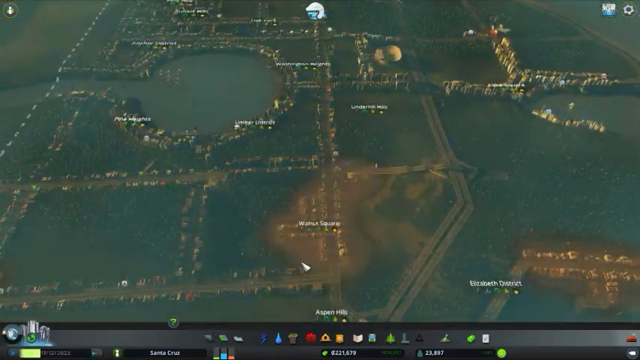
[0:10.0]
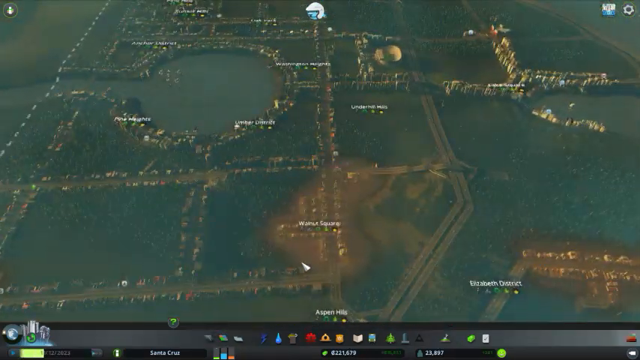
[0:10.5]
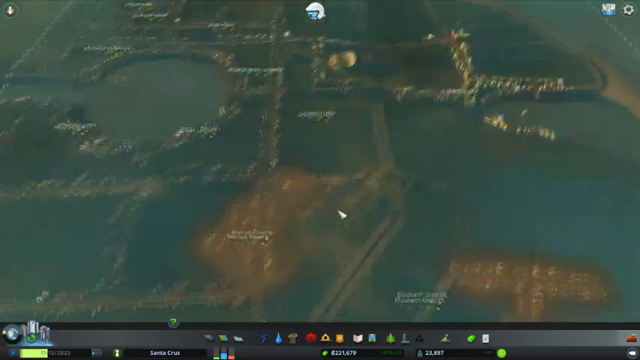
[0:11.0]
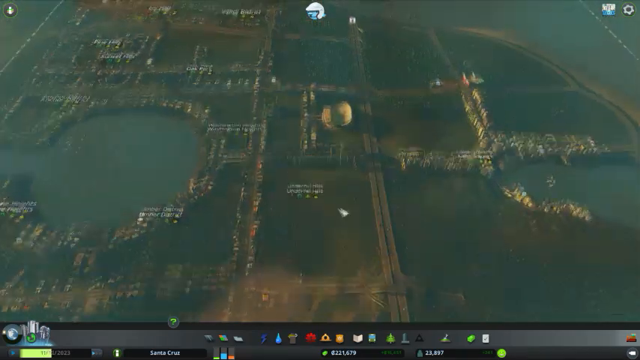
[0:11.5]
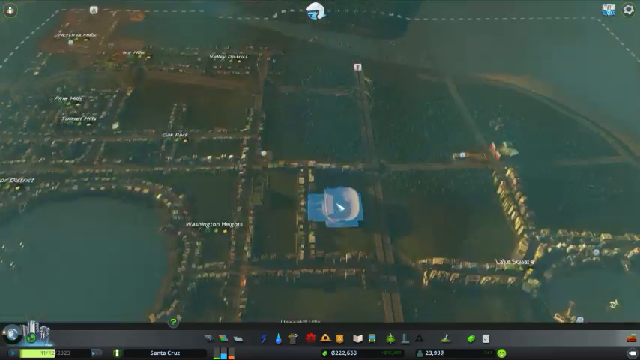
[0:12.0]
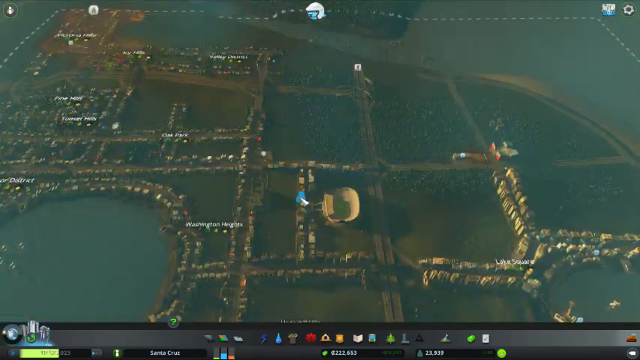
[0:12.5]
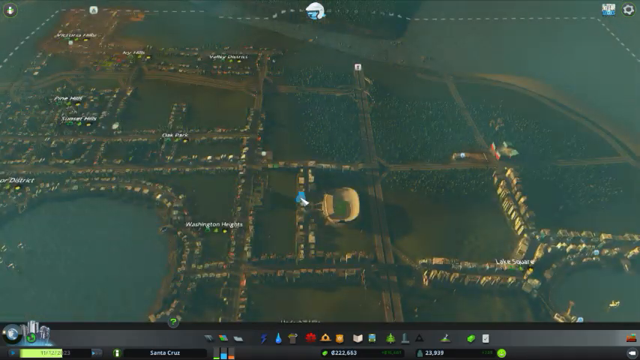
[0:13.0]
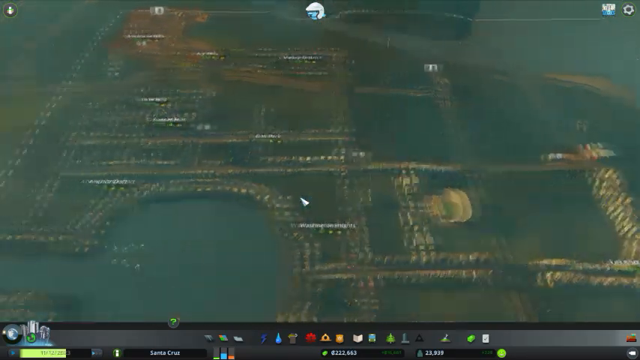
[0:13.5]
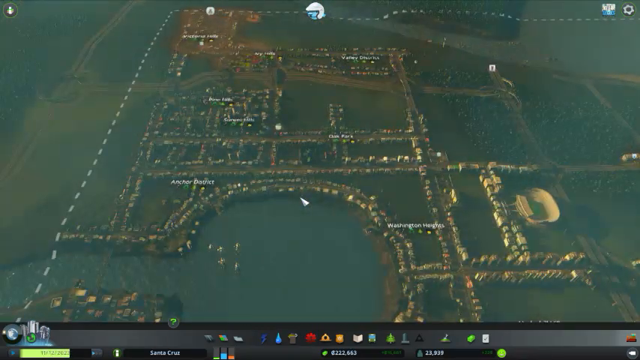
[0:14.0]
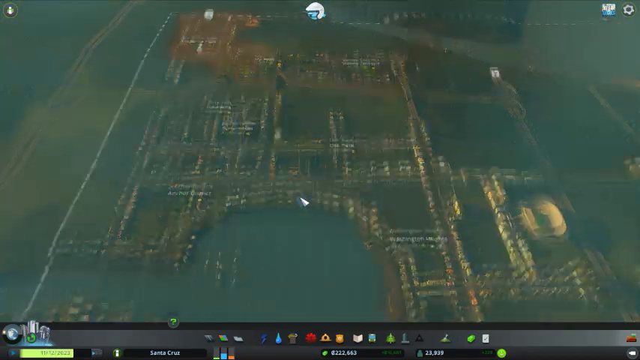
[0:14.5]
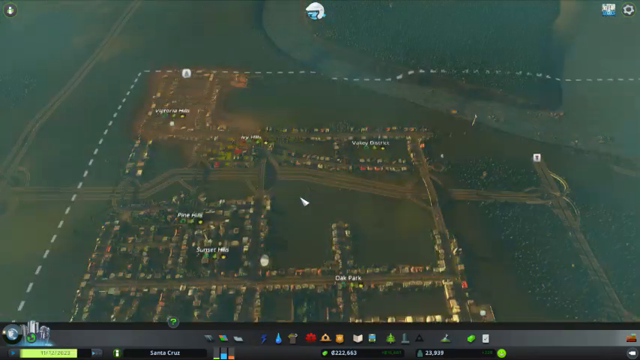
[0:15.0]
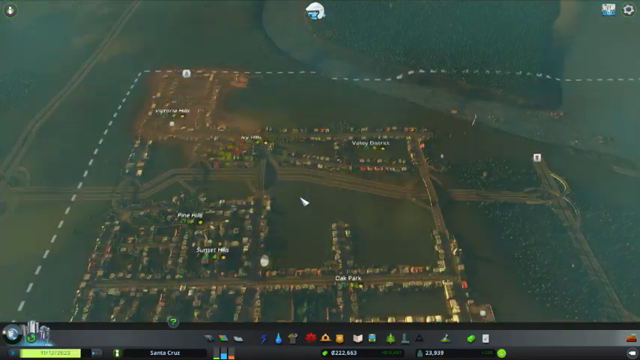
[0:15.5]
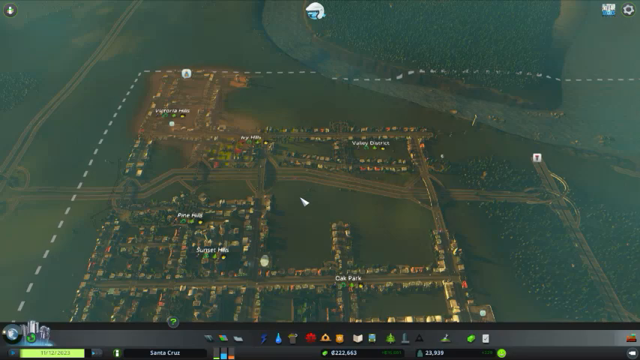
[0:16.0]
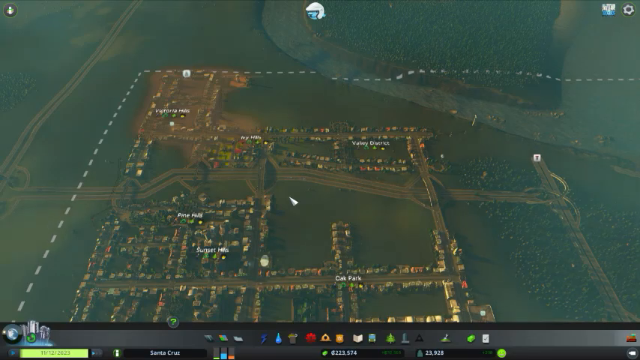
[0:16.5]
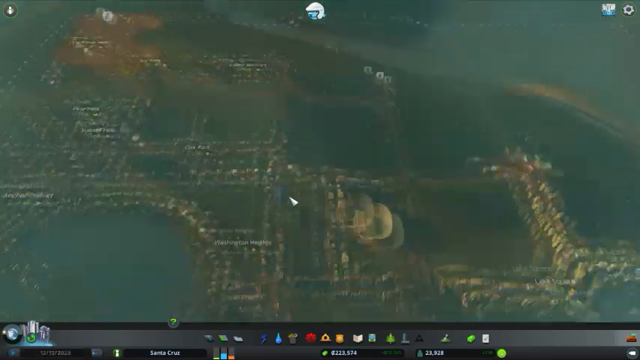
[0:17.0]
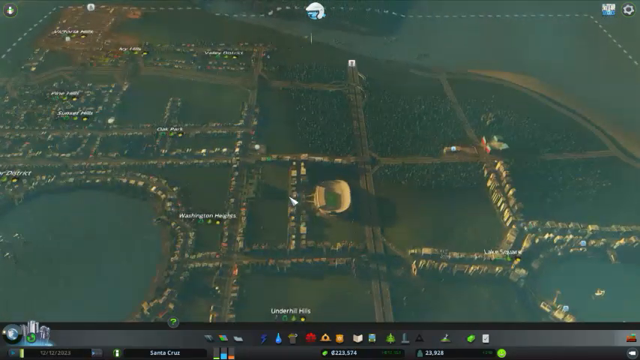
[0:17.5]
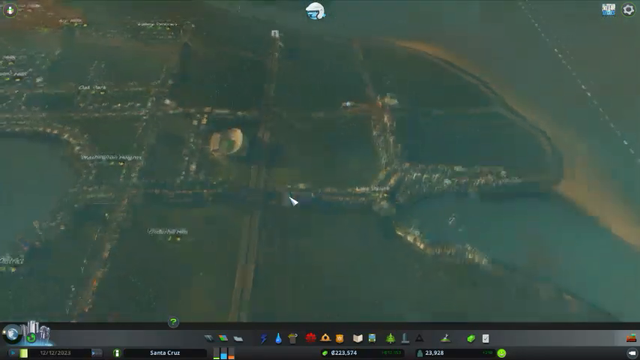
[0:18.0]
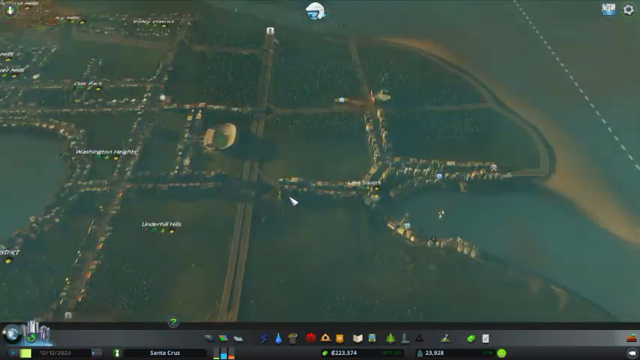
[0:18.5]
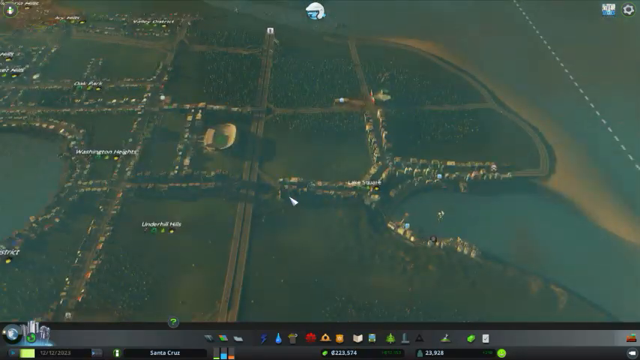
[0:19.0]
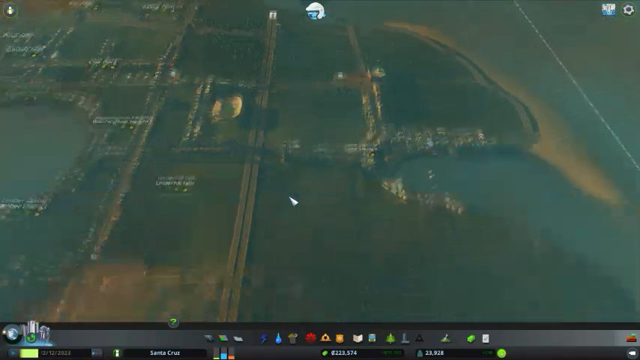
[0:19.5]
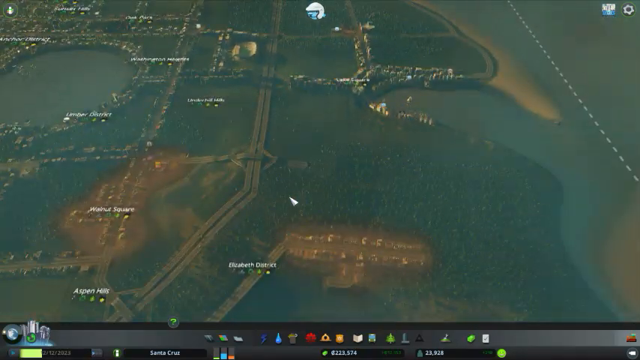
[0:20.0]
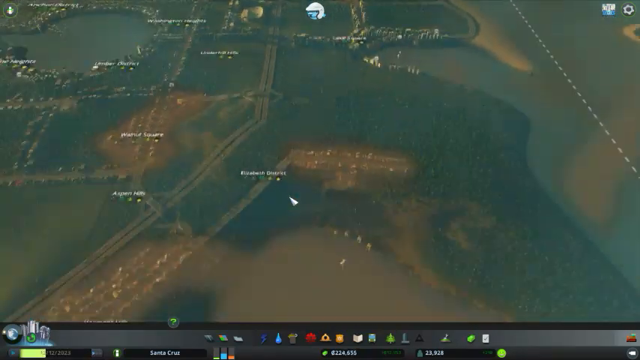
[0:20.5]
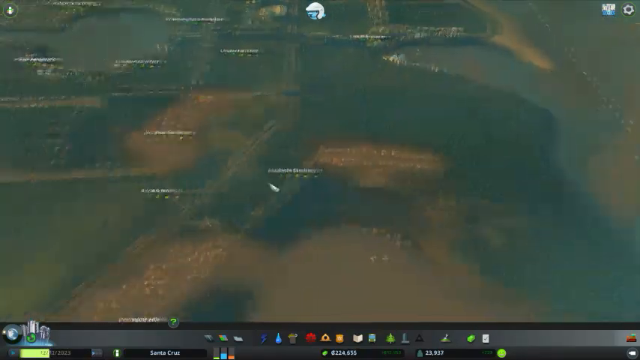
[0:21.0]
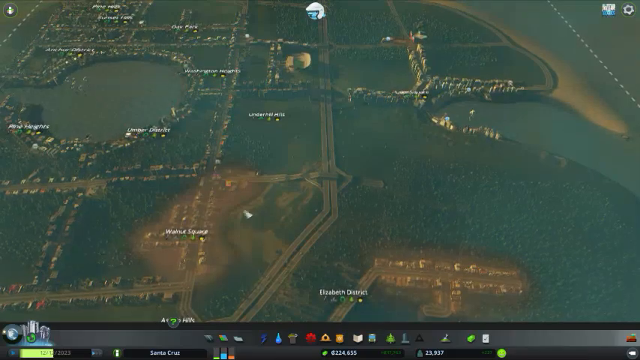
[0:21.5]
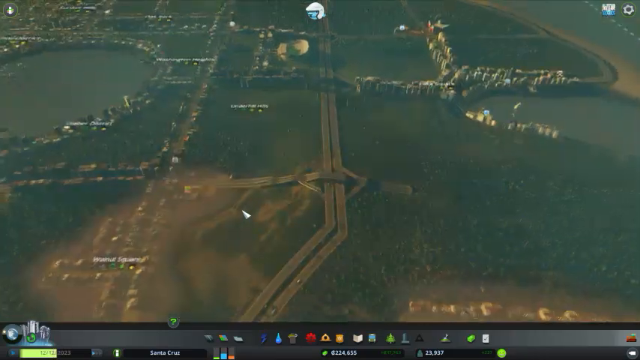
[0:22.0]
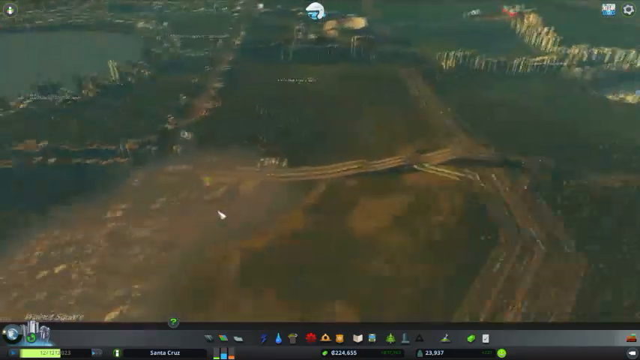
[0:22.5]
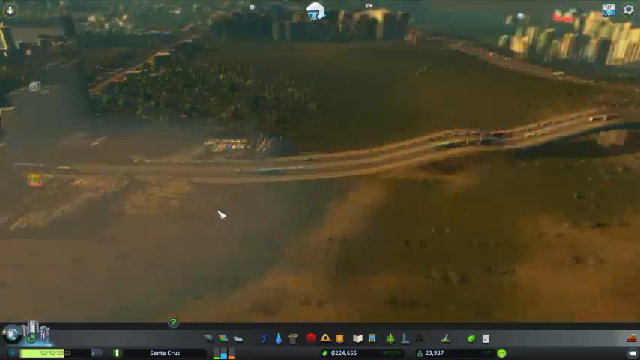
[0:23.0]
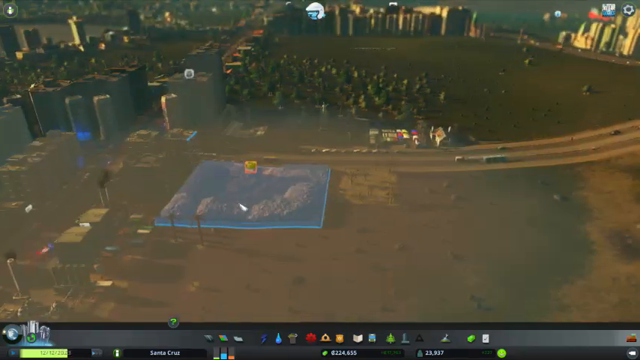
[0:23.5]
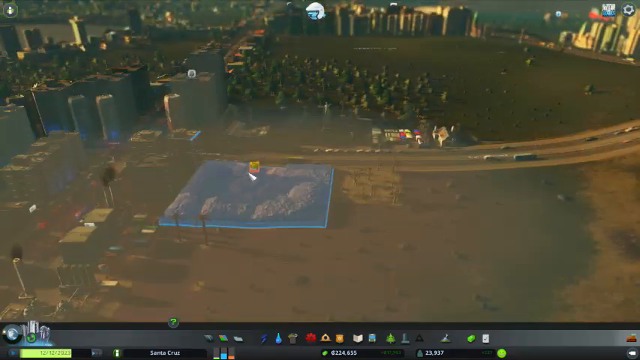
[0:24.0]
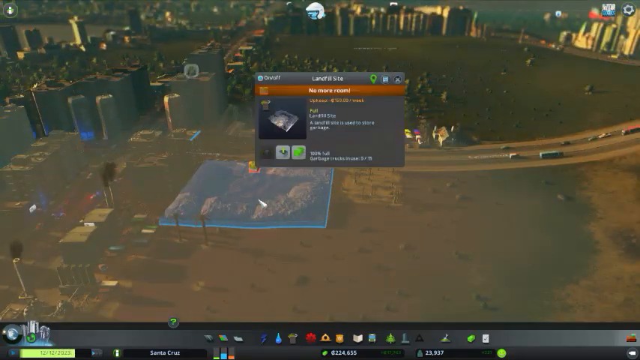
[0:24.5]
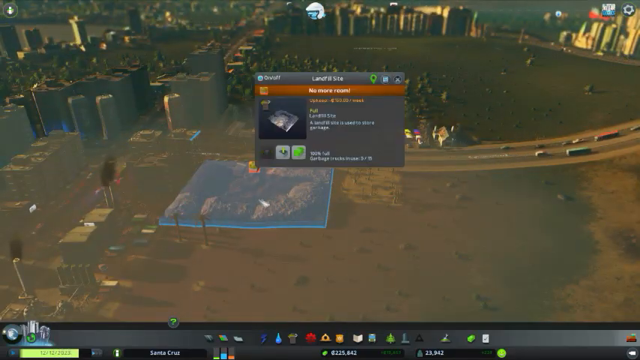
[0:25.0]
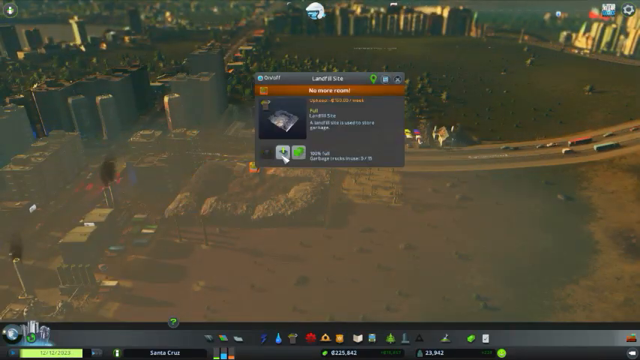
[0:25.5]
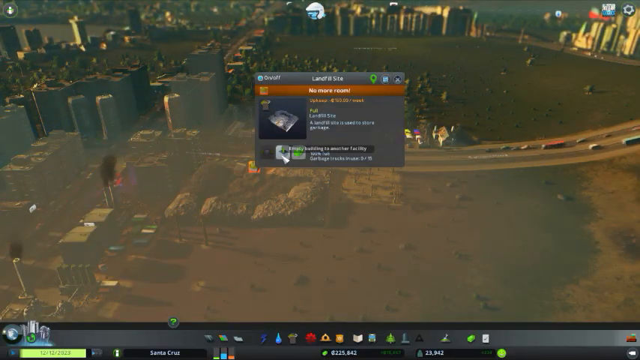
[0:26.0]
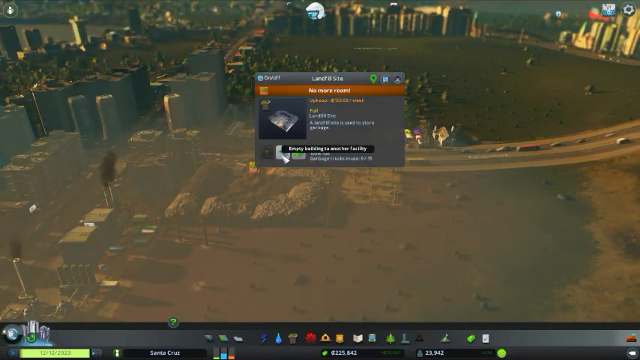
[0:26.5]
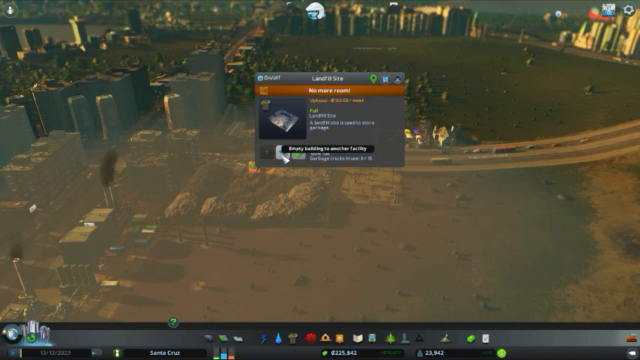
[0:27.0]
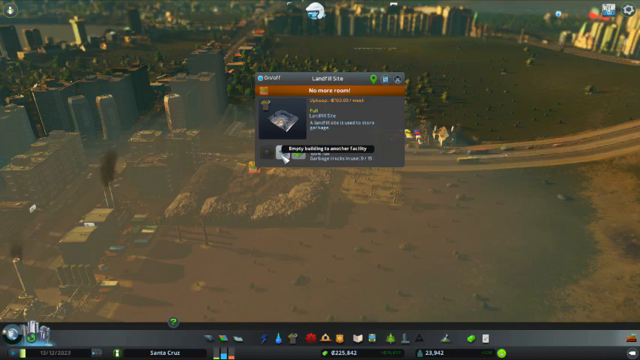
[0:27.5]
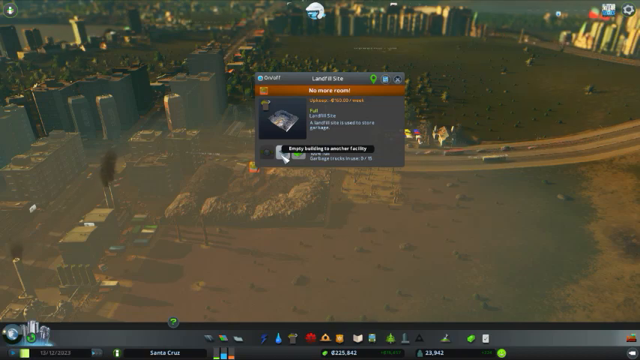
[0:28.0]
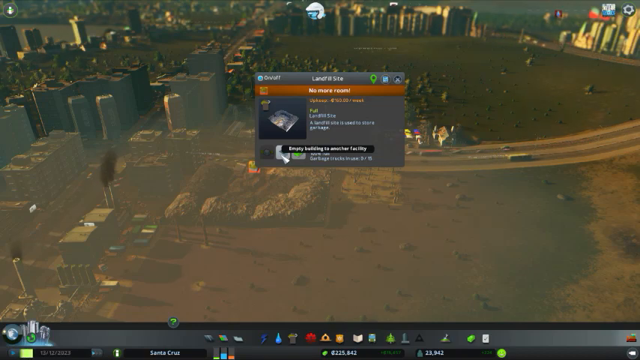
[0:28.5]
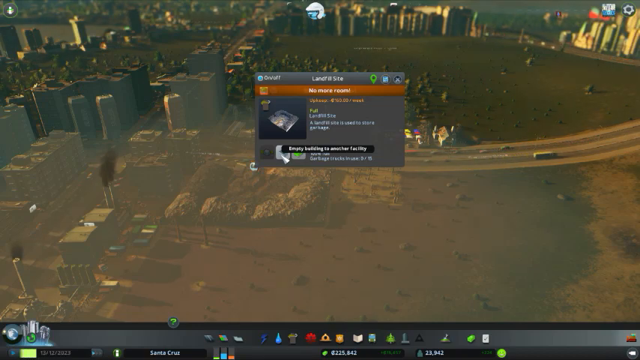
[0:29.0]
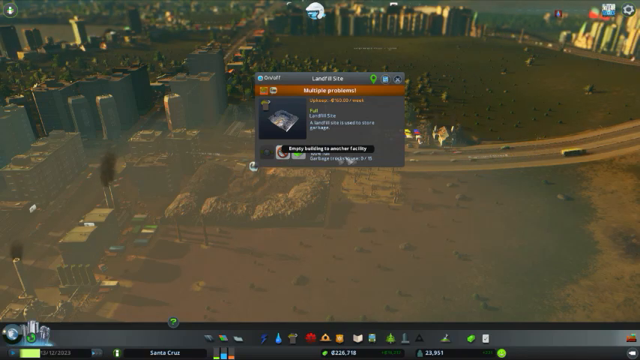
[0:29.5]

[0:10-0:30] The person's mouse cursor is at the bottom middle, and at the very bottom middle a row of small icons in different colors is displayed, including a water drop, apparently a blue lightning symbol, and an open book with white pages. Beyond this is an aerial view of a landscape with a lot of forest and greenery as well as many buildings; some are very large, like a towering city, while others are smaller homes. White text appears in multiple sections of the landscape: at the bottom right the name "Elizabeth District" with five icons below it, to the left "Aspen Hills" with four icons, further north what looks like a small town called "Walnut Square", and further north again in the middle of the screen "Underhill", with more names on the left side at the top. The person sort of scrolls upwards while keeping the aerial view, hovers over one of the areas so that it highlights in blue, then moves a little to the left and then vertically up. A small blinking square box appears at the top left. They scroll back down to the bottom right, showing the full landscape, then zoom in on a road with many cars driving to the right. A section that looks kind of like a dirt area is highlighted in transparent blue. Hovering over it brings up a pop-up with a gray background and white text reading "Landfill Site" and "No more room". They hover over and click an option that says "Empty Building", and a pop-up in the same box then reads "Multiple Problems".